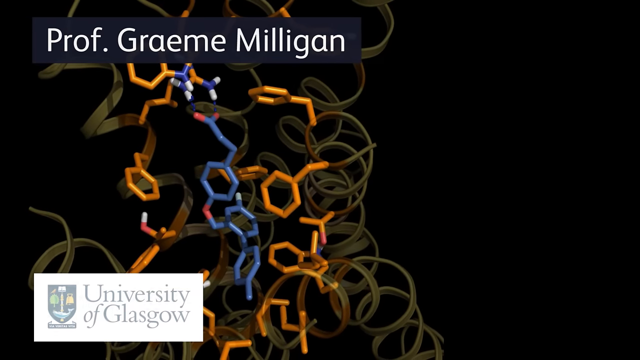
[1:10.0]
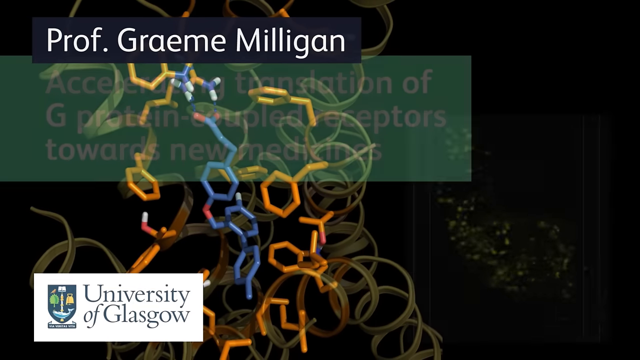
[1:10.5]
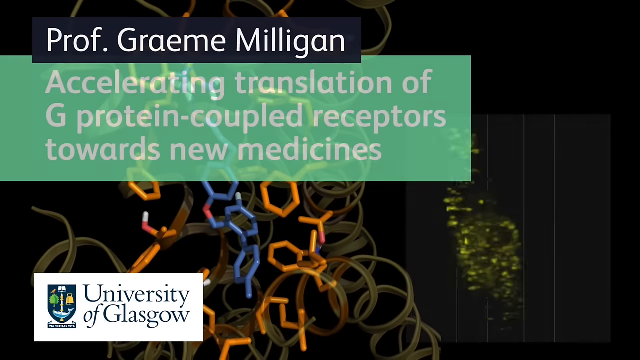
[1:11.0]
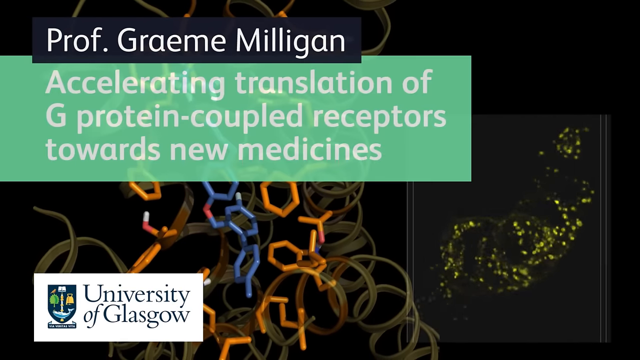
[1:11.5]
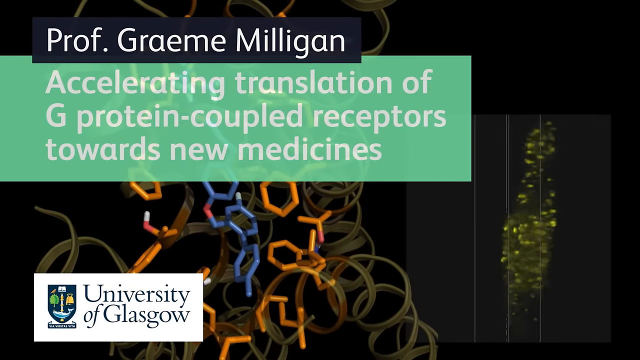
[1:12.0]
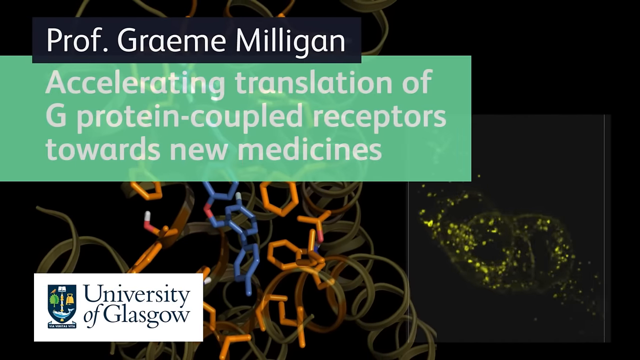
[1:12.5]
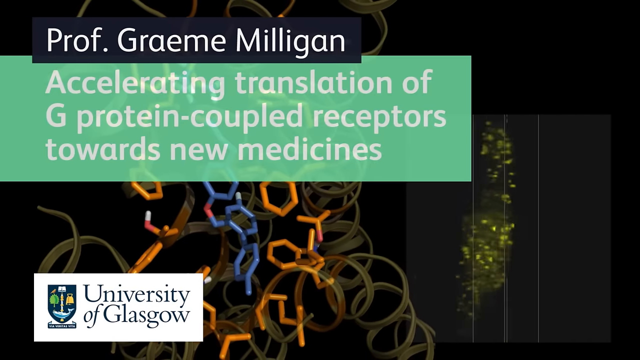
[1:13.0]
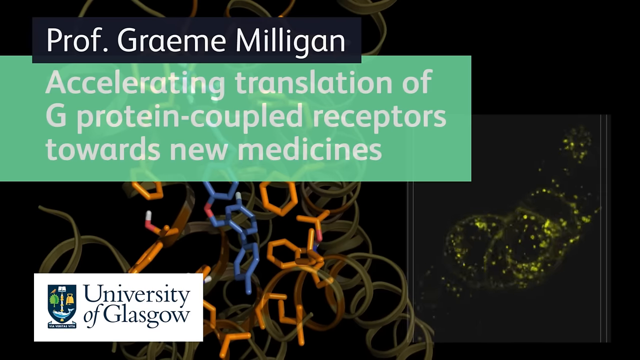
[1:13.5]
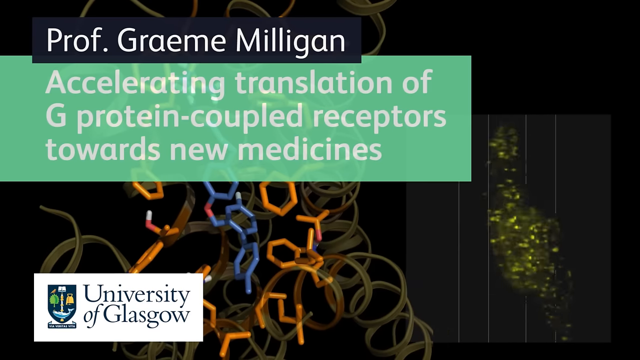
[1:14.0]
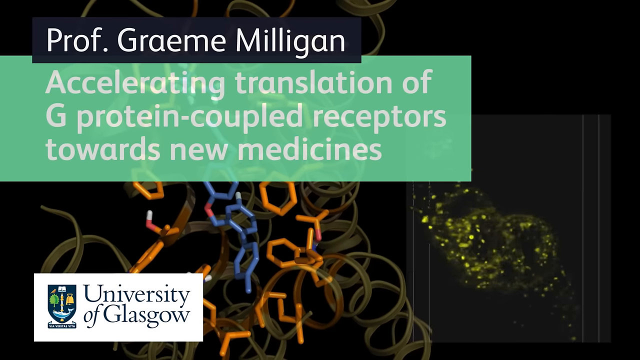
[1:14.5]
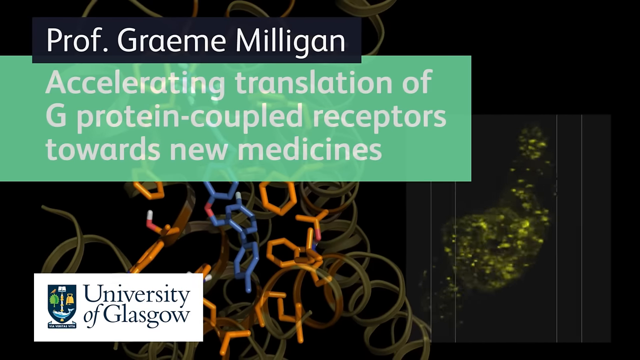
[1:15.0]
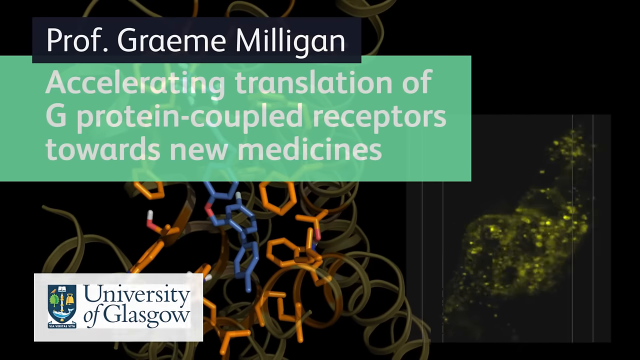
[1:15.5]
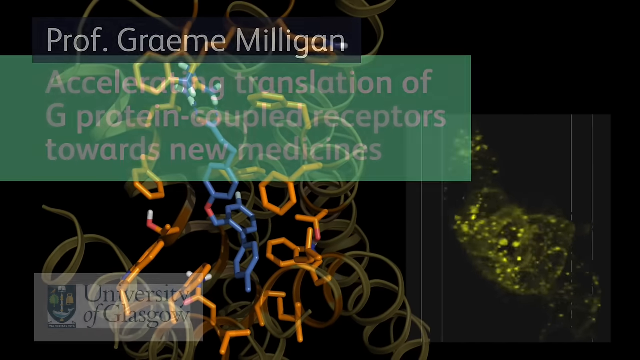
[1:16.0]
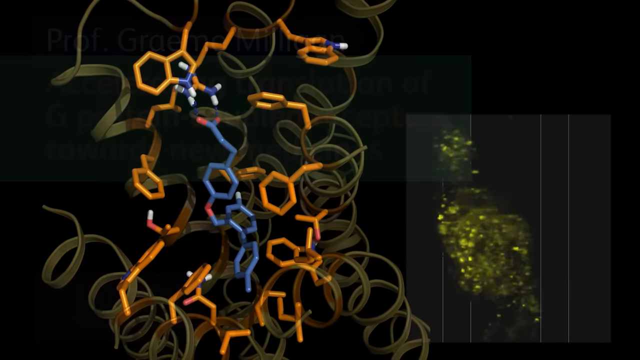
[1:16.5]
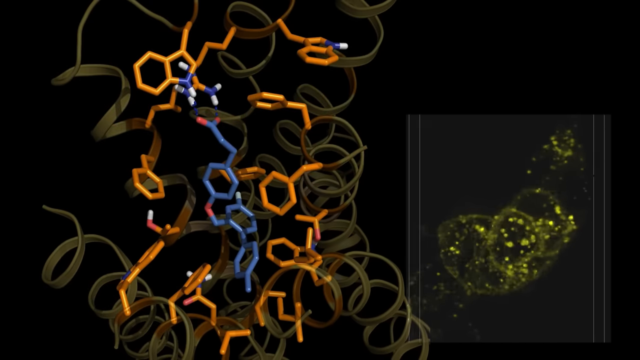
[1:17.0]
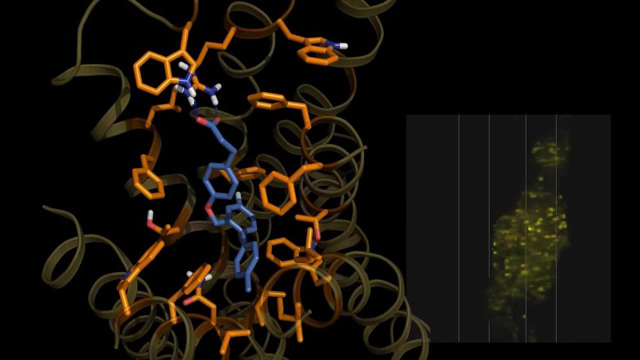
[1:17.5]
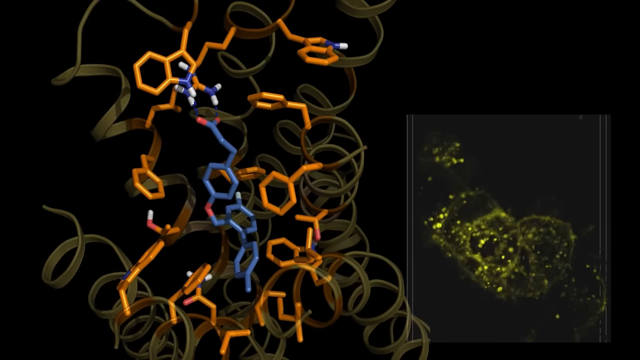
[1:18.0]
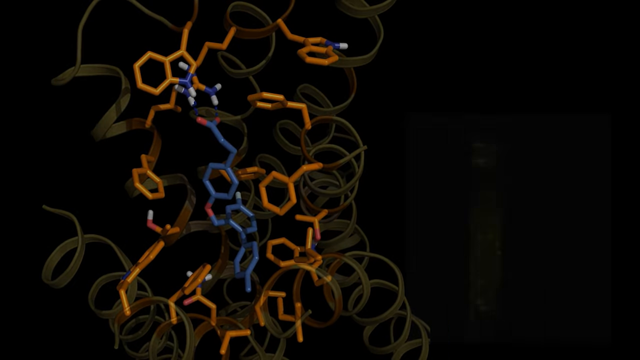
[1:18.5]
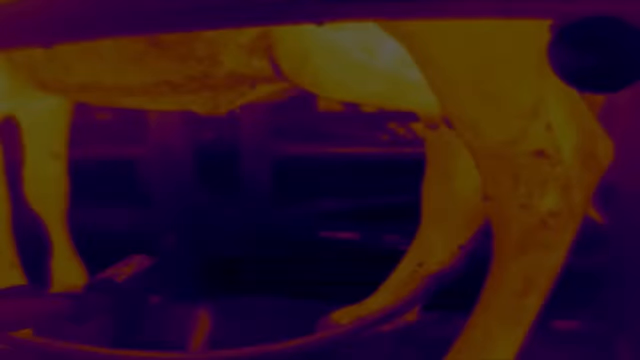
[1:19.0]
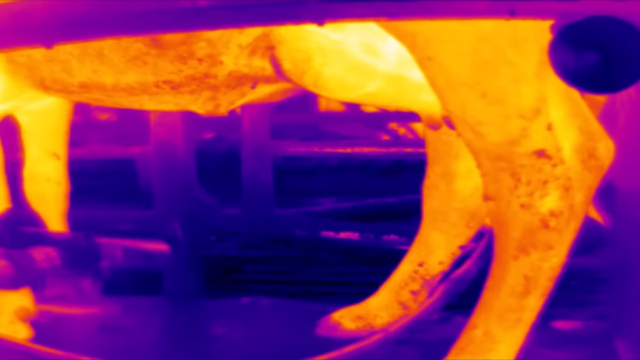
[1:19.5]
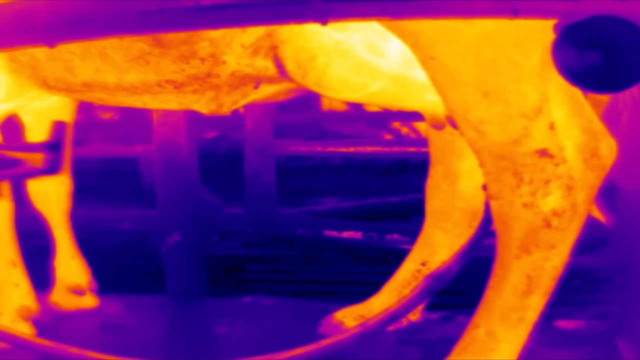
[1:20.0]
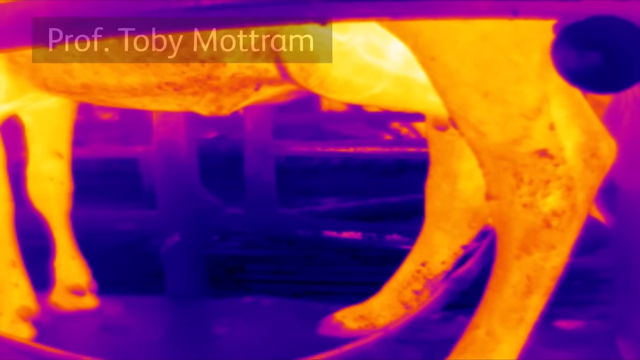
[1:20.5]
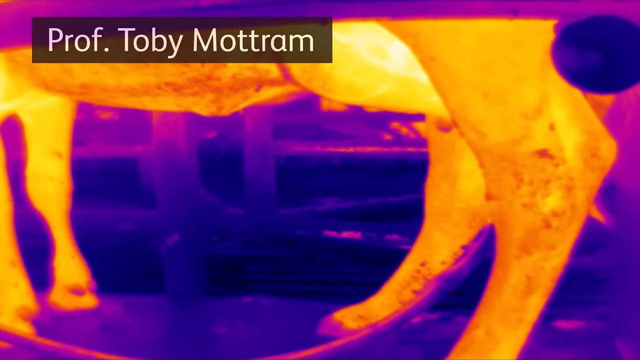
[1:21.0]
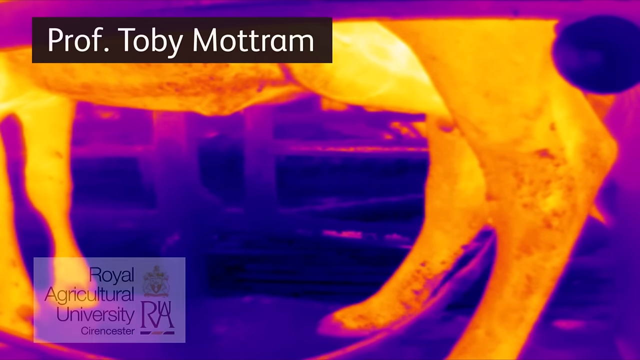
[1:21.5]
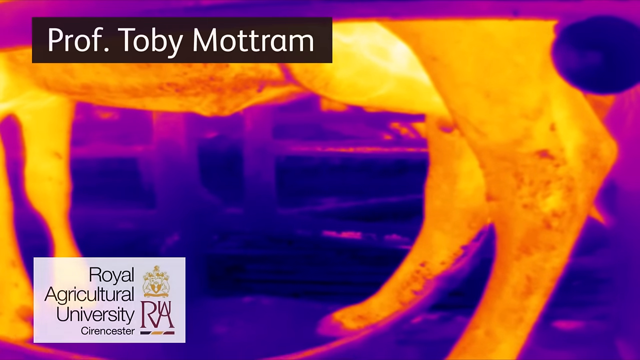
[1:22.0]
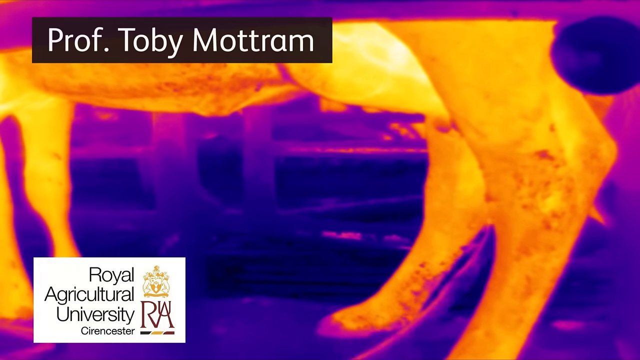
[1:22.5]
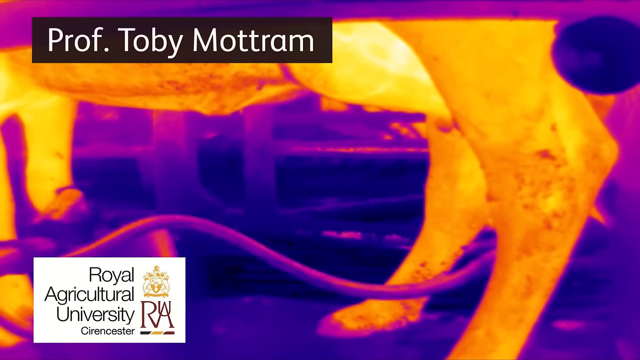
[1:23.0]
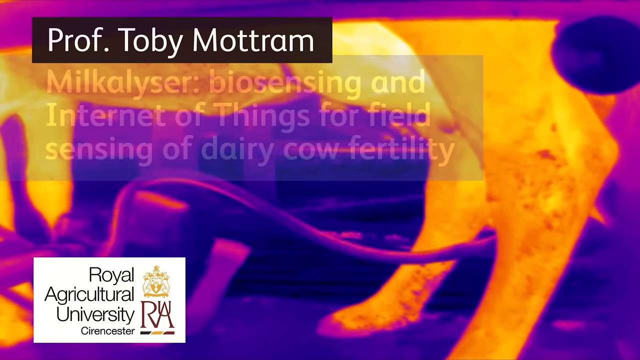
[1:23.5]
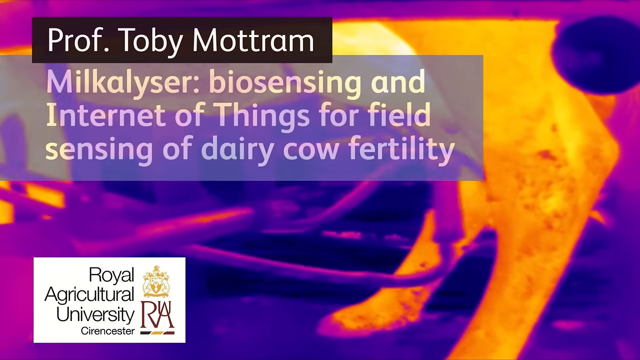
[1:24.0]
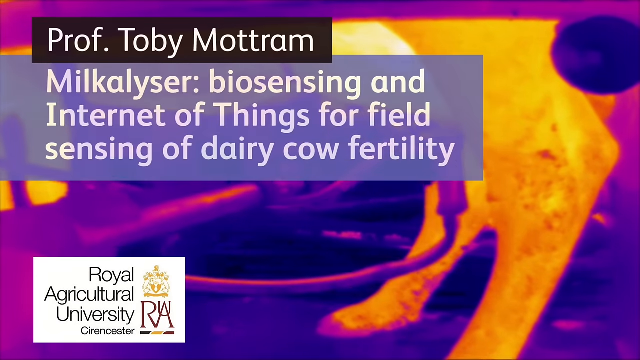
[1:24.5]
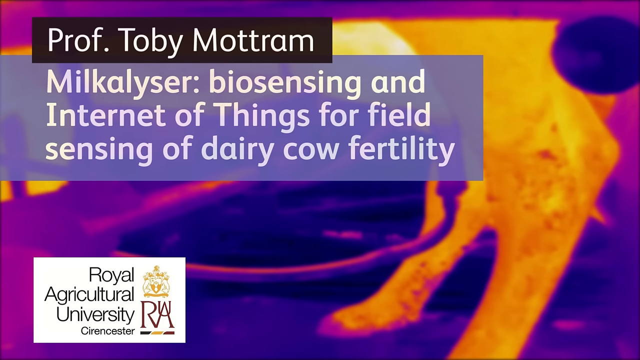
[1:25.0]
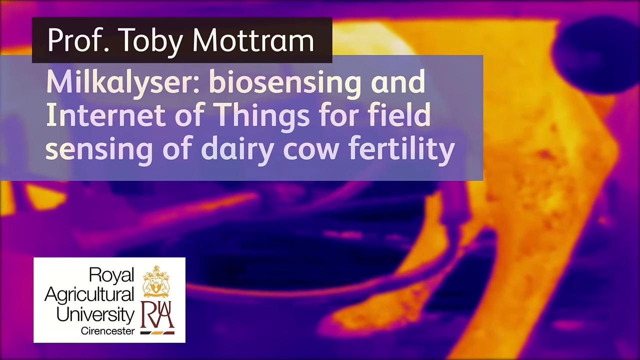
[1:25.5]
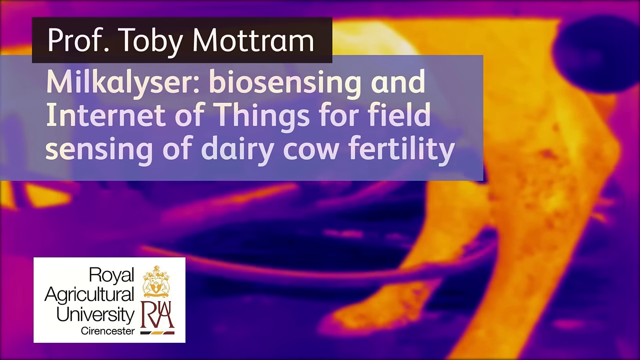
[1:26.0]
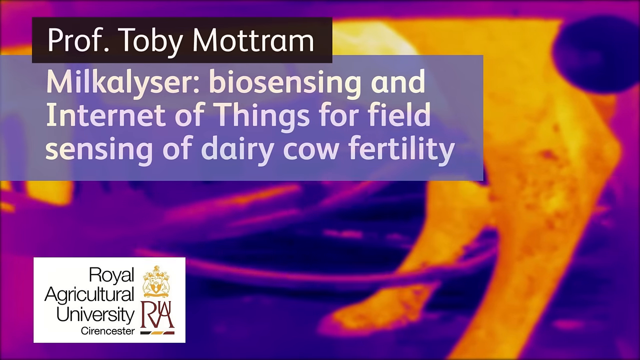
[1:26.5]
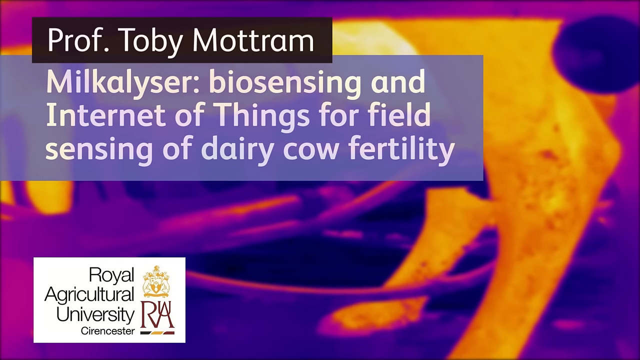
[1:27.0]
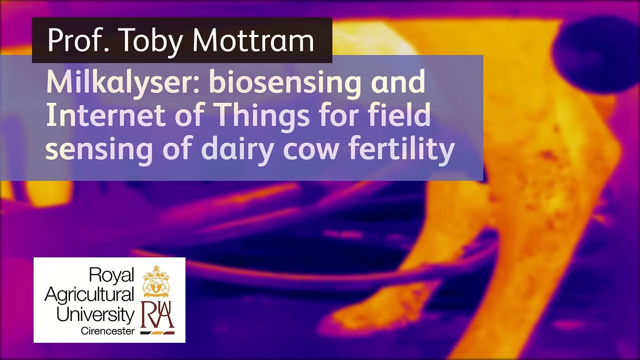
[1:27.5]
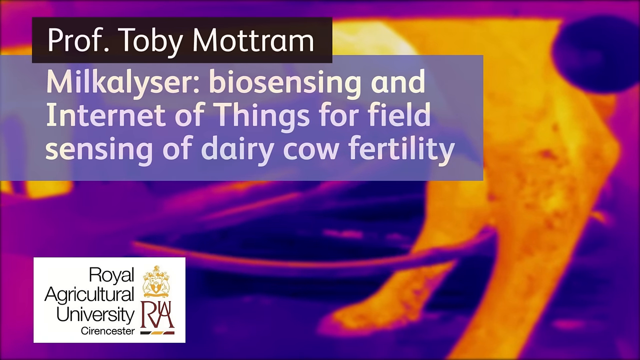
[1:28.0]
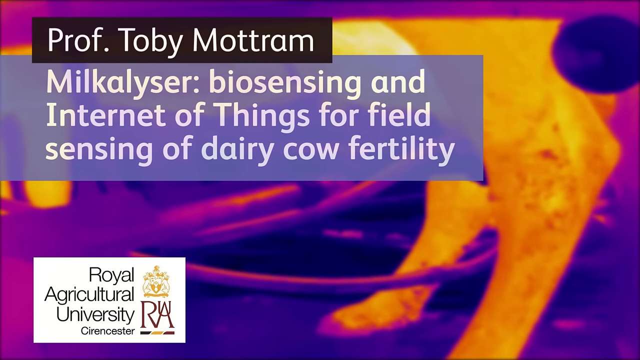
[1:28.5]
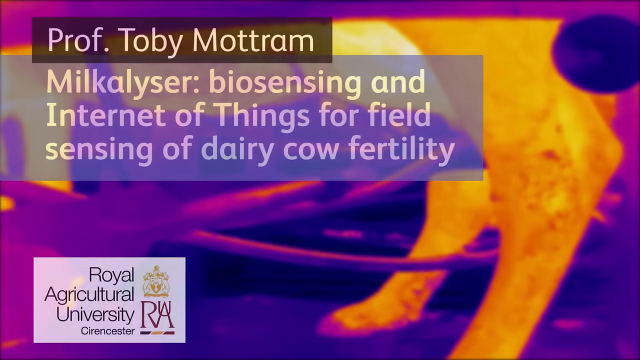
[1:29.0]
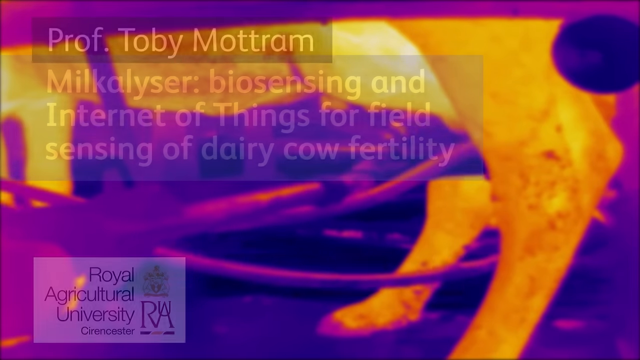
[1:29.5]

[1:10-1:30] A screen with a black background shows a dark blue banner at the top left reading "Professor GRAEME Milligan" in white letters. At the bottom left, a white banner reads "University of Glasgow", with the University of Glasgow symbol to its left. On screen are a bunch of squiggly lines that curl up sort of like springs; some have lines coming off them that form hexagons, some orange and some blue. A green banner appears reading "acceleration of G-proteins coupled receptors towards new medicines". It disappears, and something on the right of the screen spins around. That disappears too, and what looks like a thermal image of the bottom of a cow or some sort of hooved animal appears, with "Professor Toby Mottram" at the top.